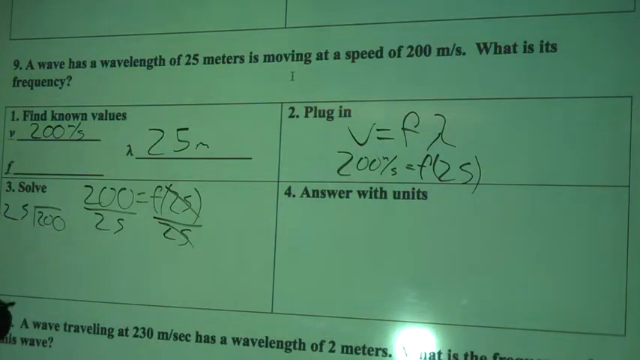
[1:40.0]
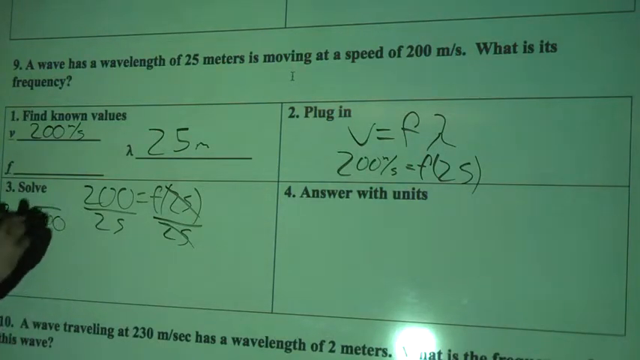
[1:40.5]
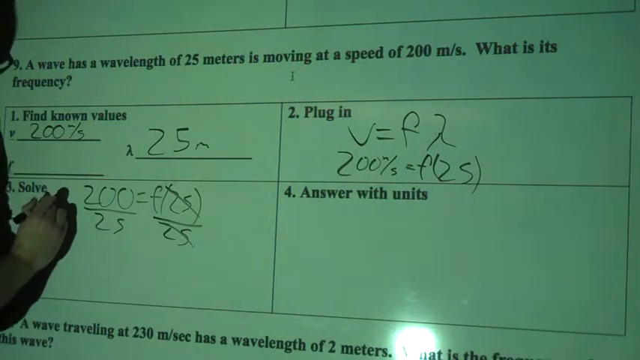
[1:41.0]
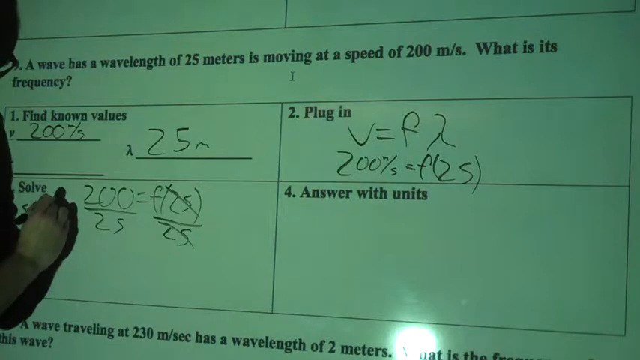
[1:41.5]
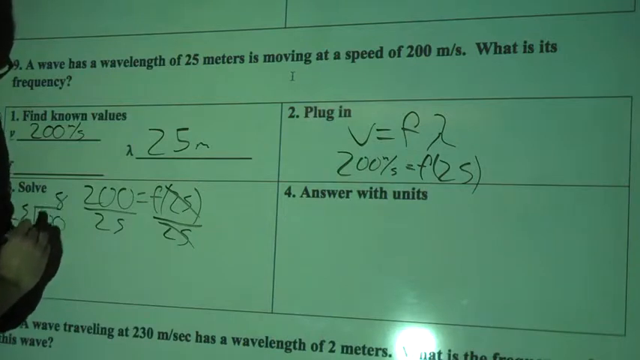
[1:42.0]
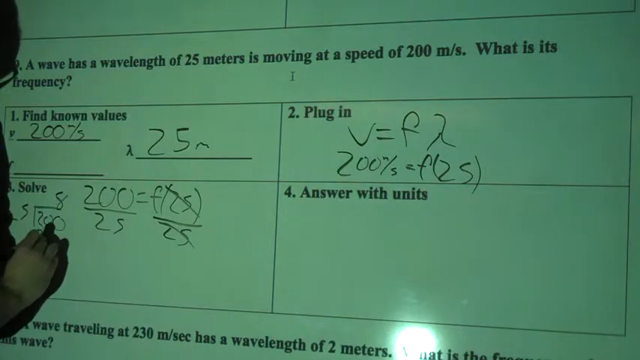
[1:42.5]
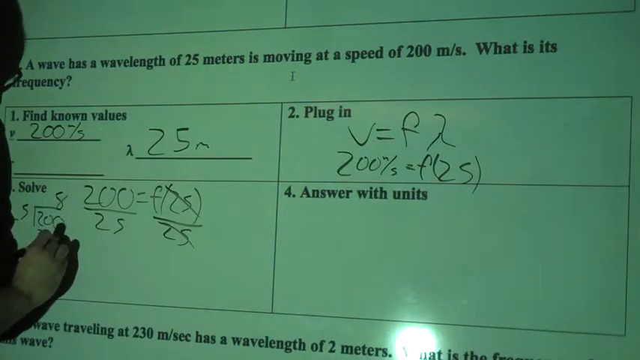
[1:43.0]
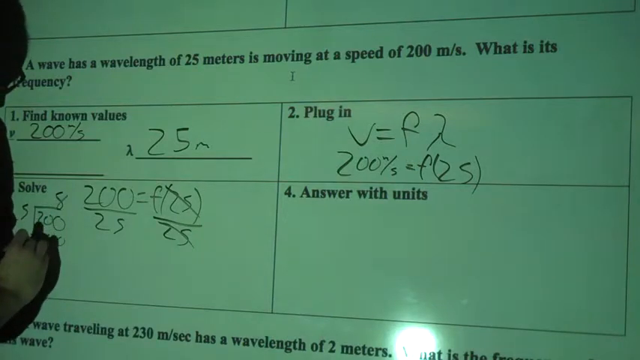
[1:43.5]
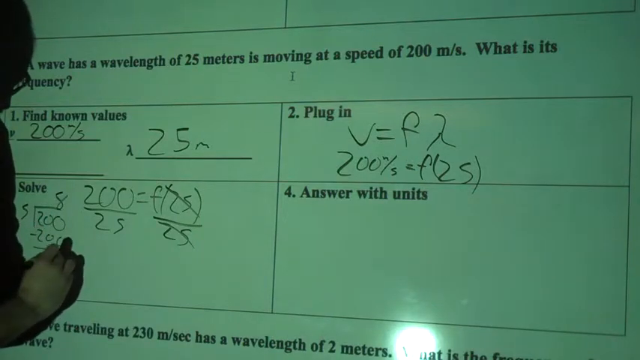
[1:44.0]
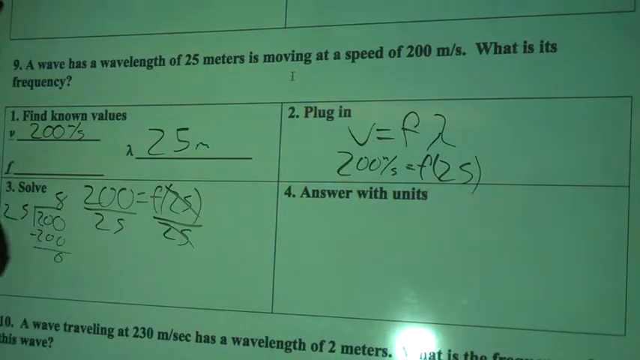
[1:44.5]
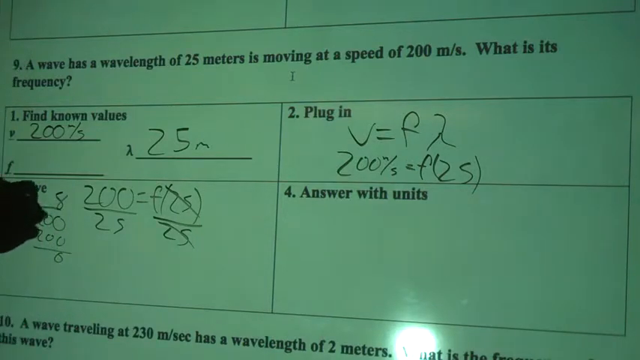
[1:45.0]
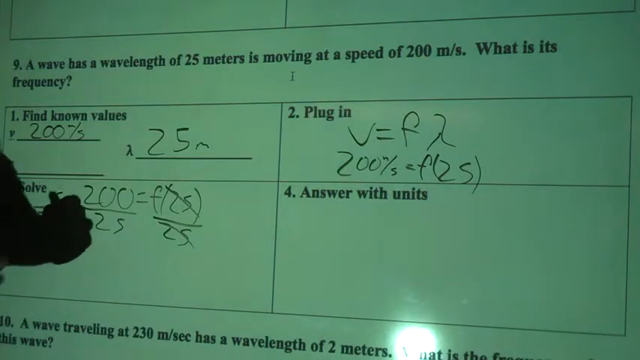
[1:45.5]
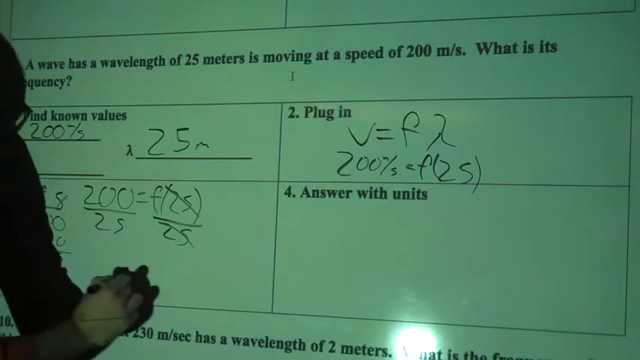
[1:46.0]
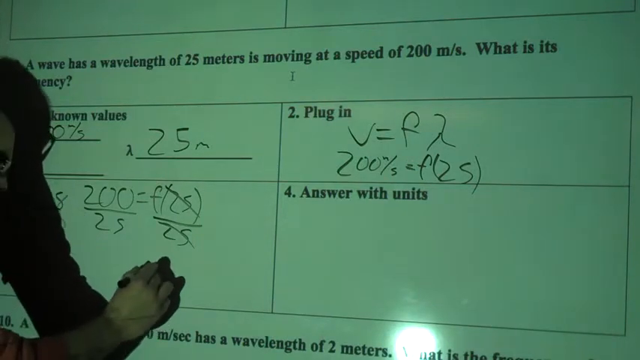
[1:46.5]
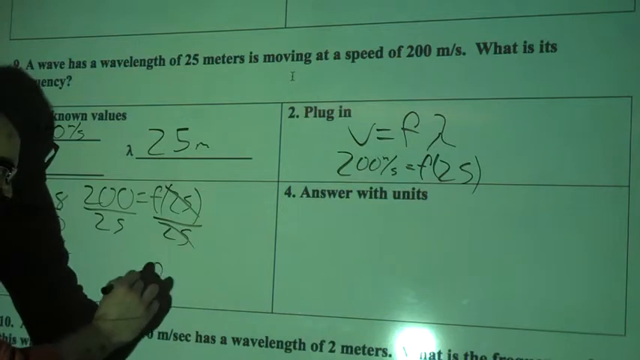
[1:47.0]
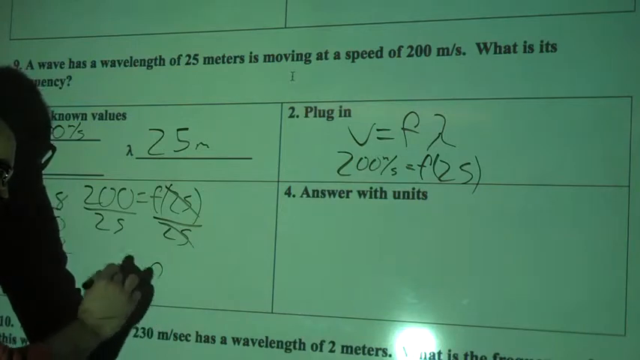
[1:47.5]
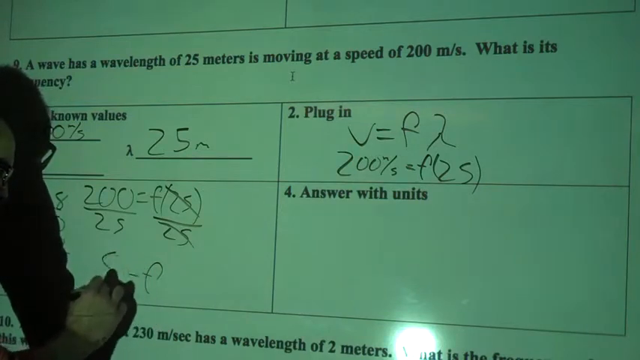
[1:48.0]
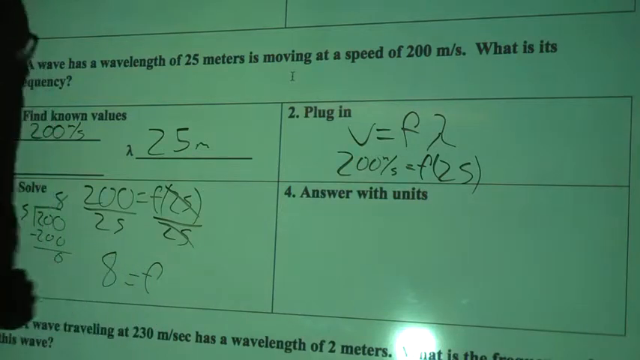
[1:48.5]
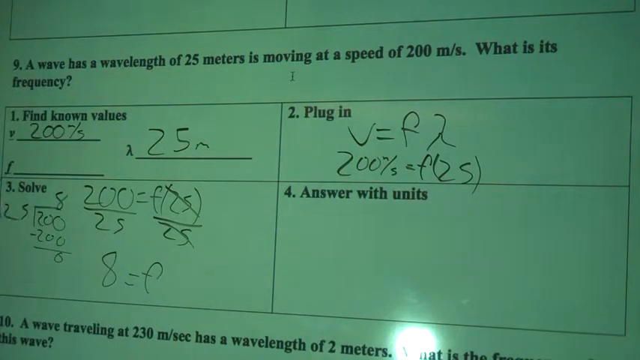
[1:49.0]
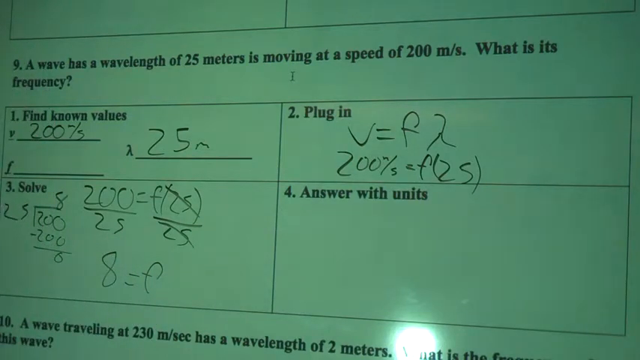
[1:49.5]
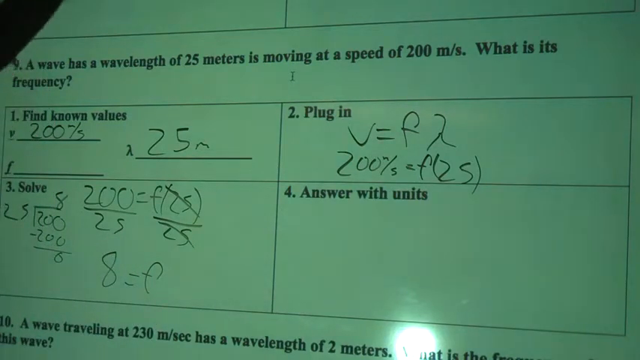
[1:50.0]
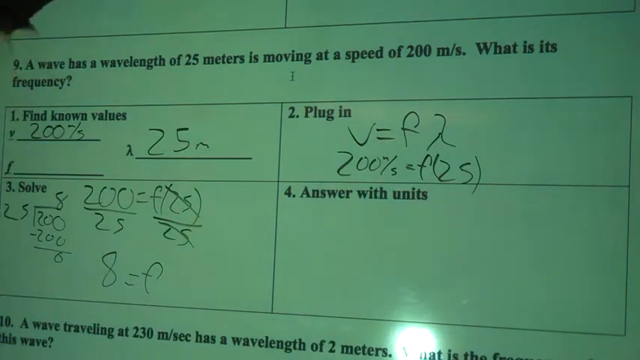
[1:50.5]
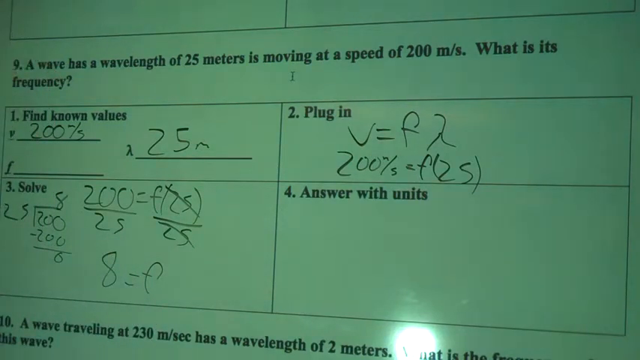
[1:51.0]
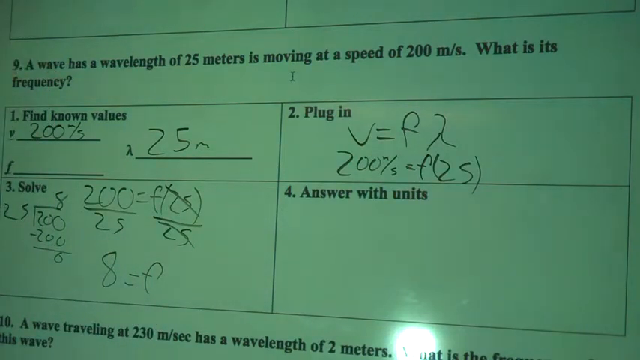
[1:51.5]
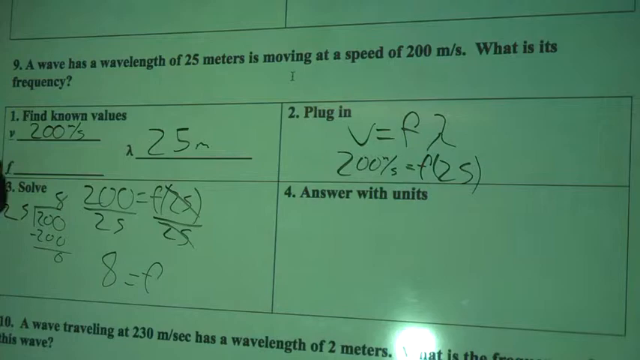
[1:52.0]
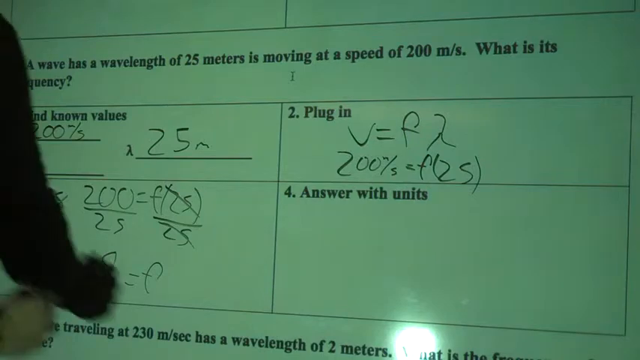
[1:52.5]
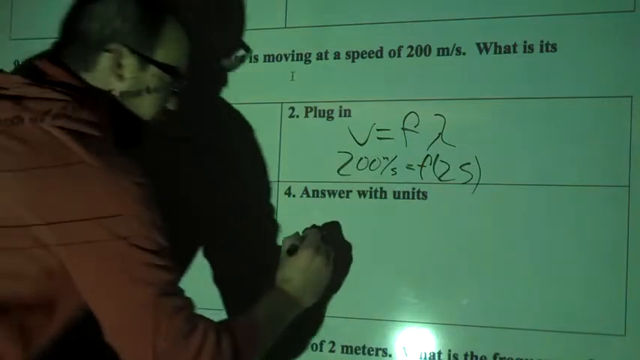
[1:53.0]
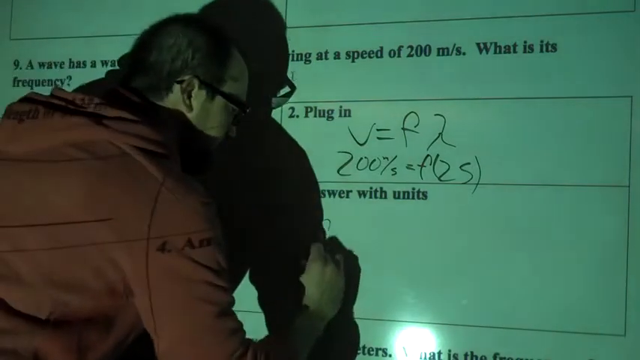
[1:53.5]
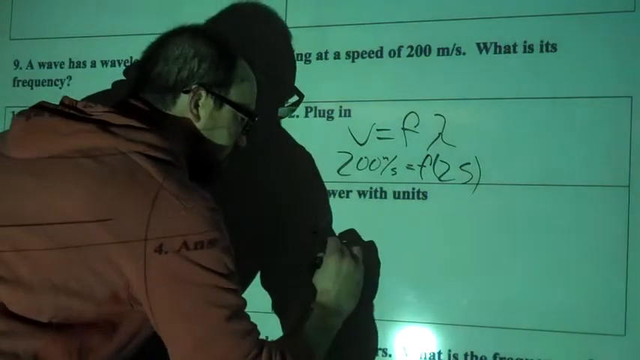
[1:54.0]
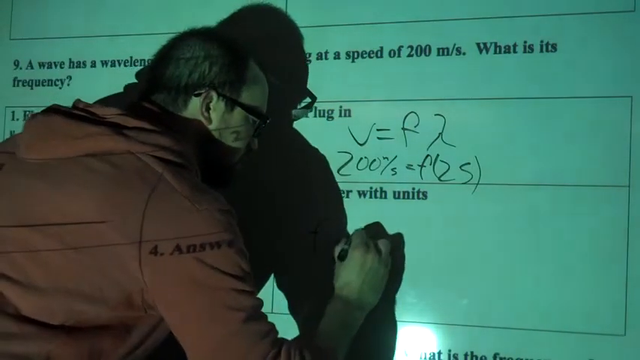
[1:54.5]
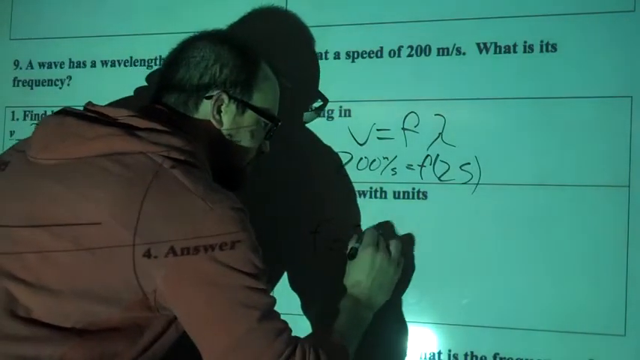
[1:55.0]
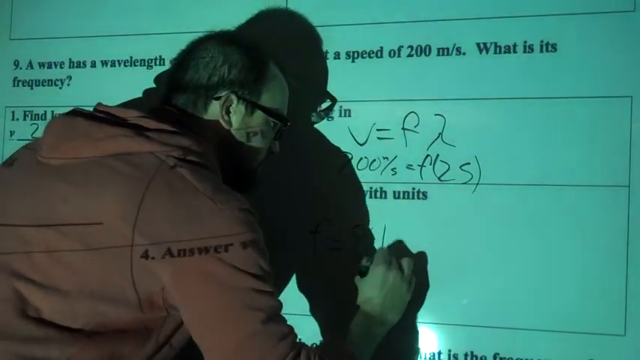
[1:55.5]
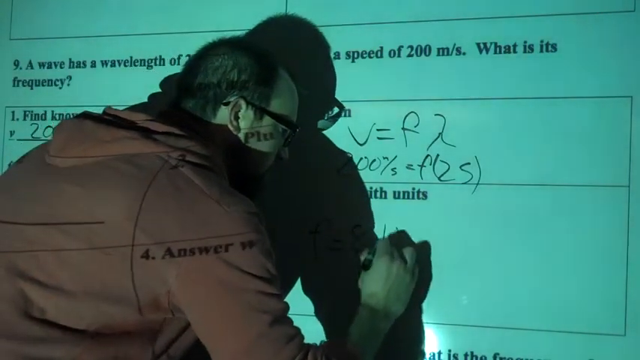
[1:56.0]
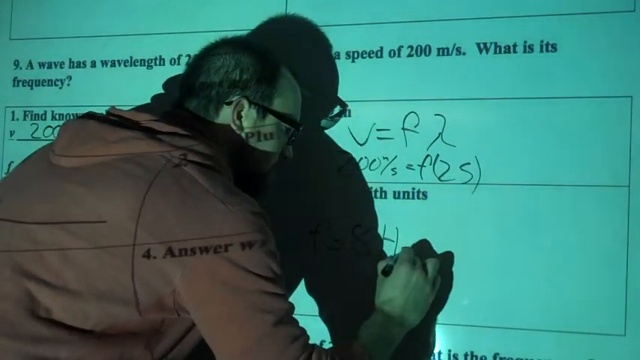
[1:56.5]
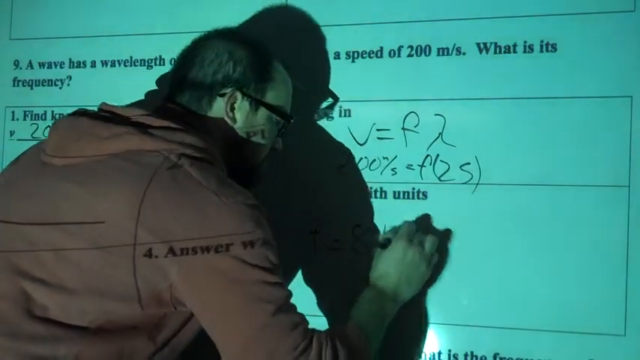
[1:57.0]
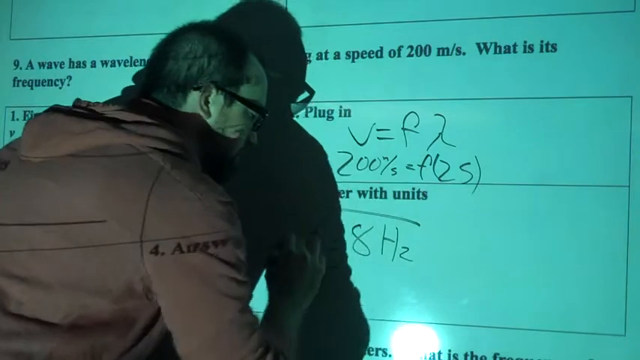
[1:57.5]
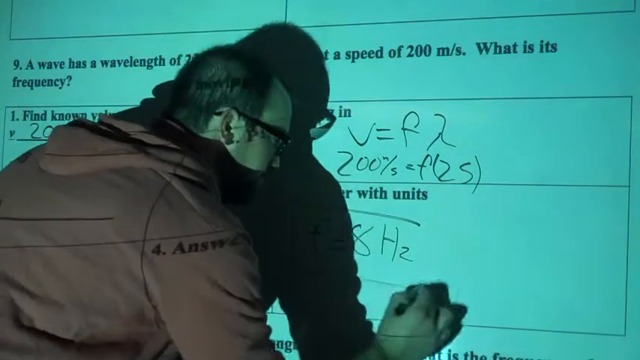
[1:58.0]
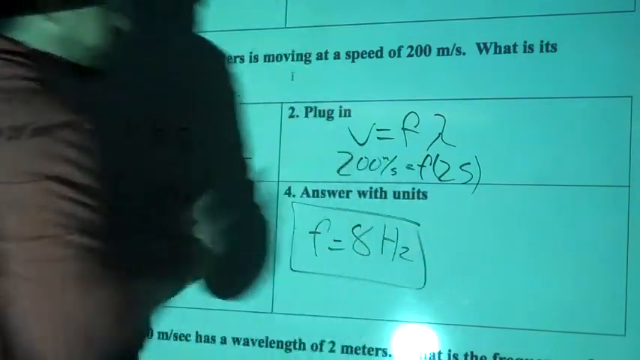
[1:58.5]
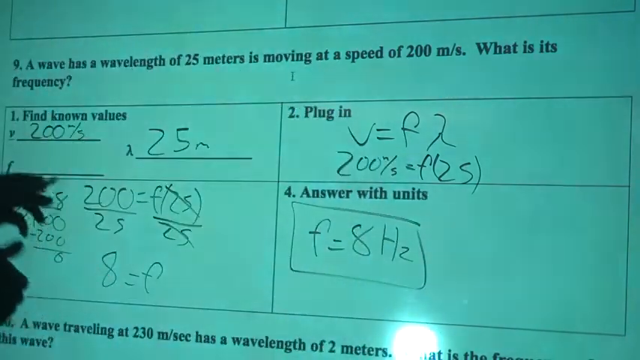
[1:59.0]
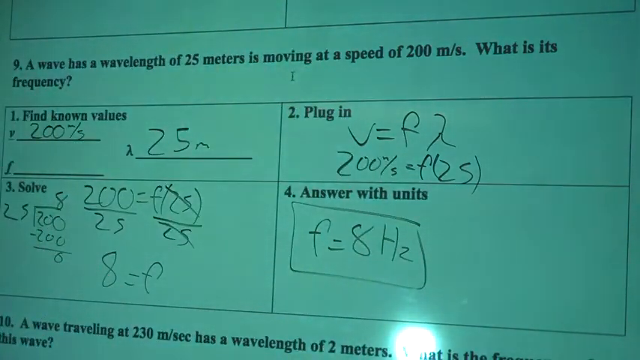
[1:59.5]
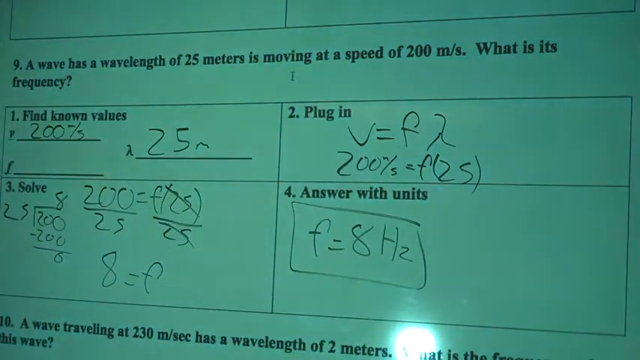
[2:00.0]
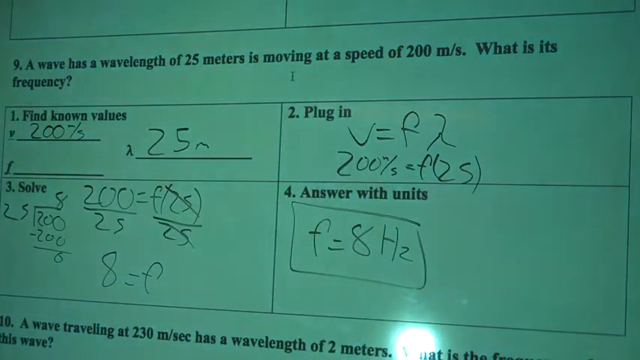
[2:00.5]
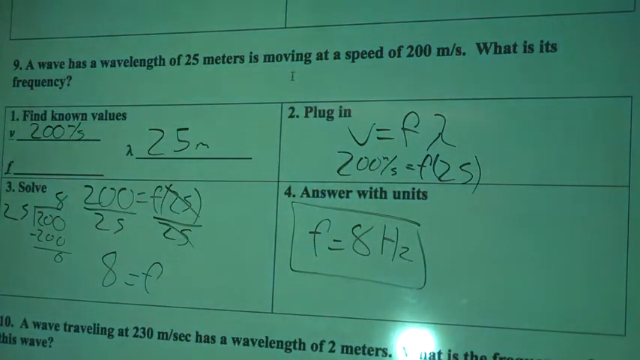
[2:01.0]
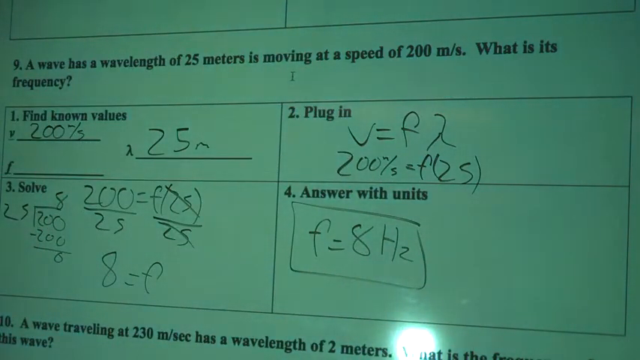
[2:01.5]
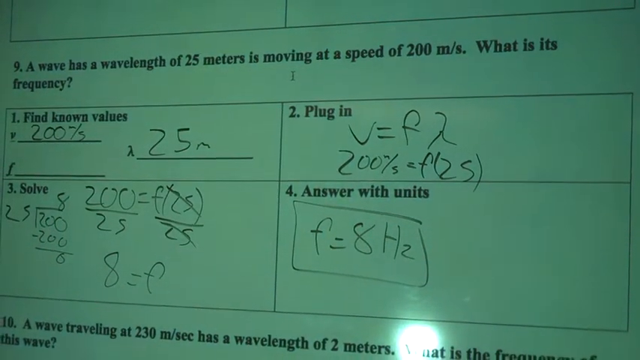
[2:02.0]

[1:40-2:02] The professor writes 8 on top of the 200 squared, subtracts 200, leaves a zero at the bottom, and writes equals f to the bottom right. In the last box, "answer with units," he writes f equals 8 Hz and draws a box around it to mark it as the answer.